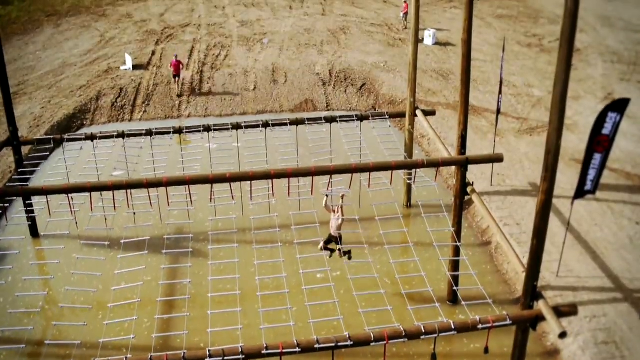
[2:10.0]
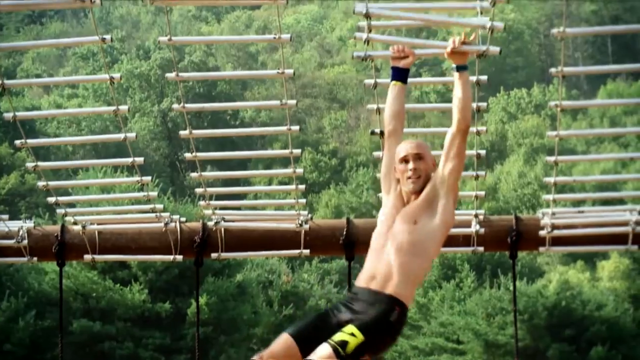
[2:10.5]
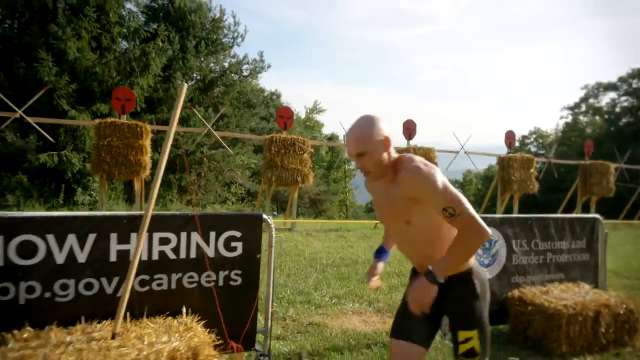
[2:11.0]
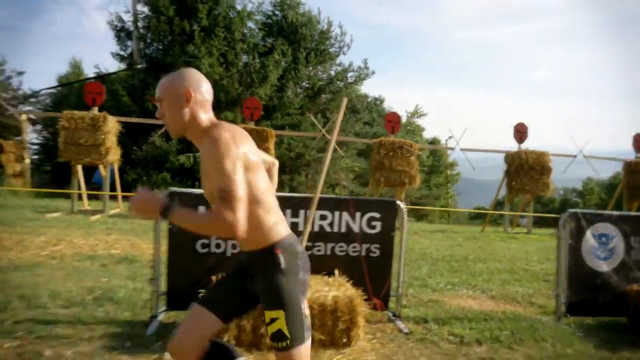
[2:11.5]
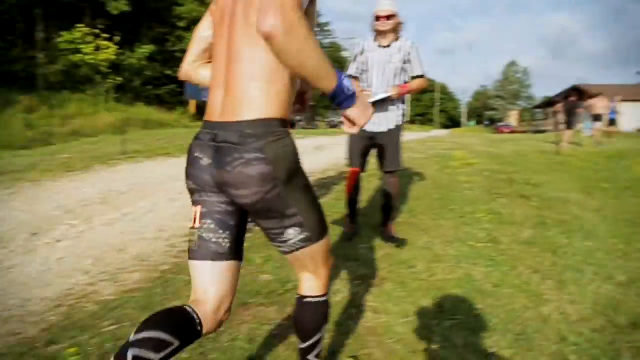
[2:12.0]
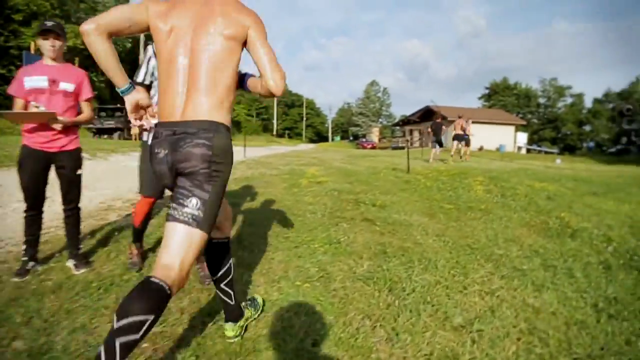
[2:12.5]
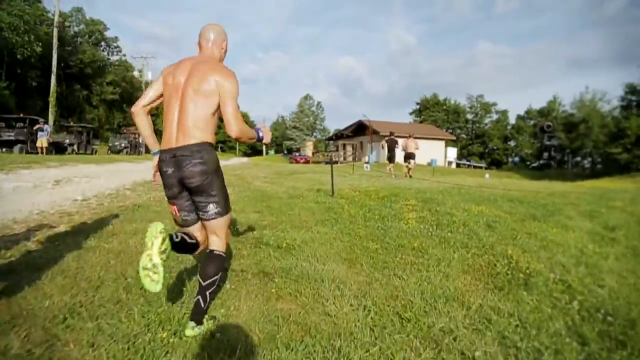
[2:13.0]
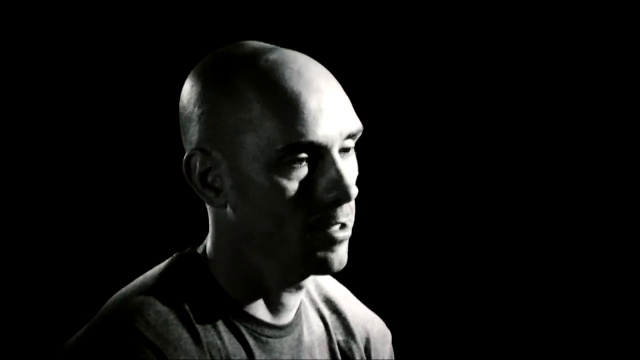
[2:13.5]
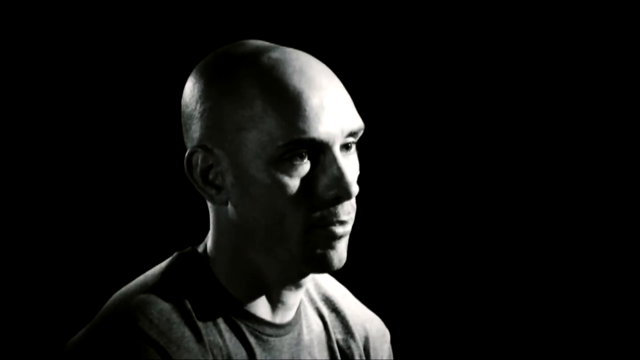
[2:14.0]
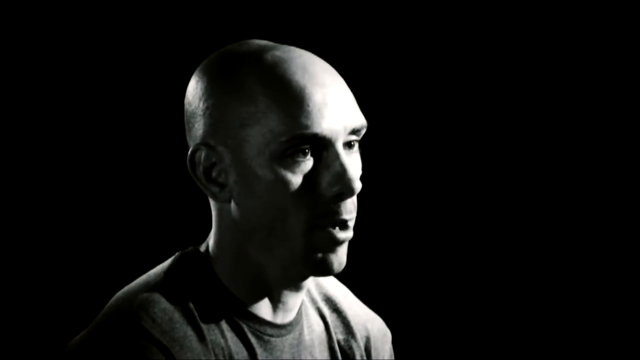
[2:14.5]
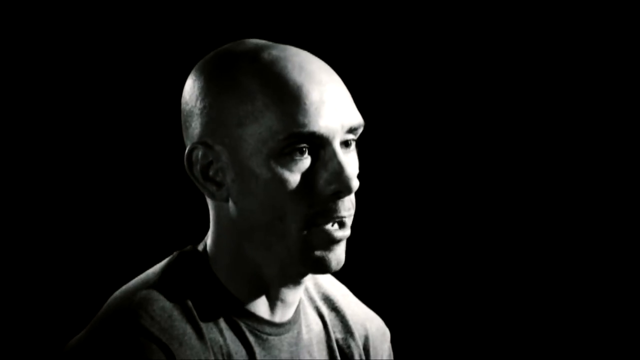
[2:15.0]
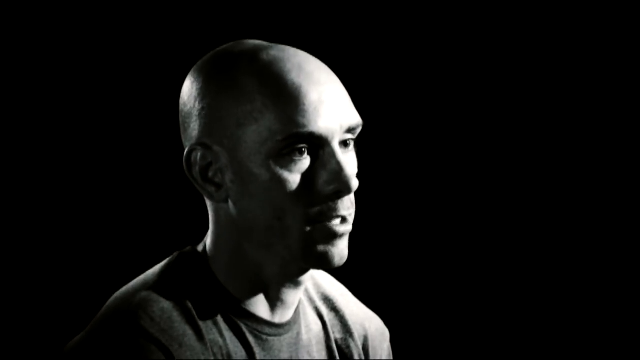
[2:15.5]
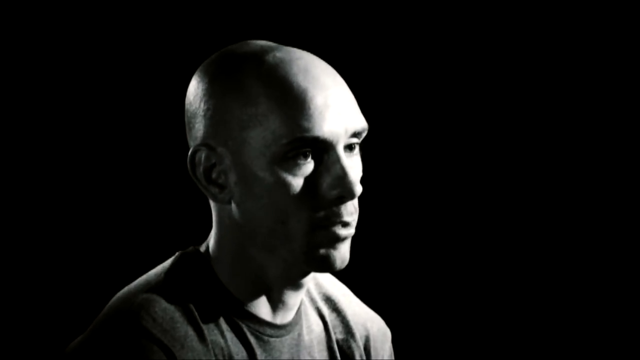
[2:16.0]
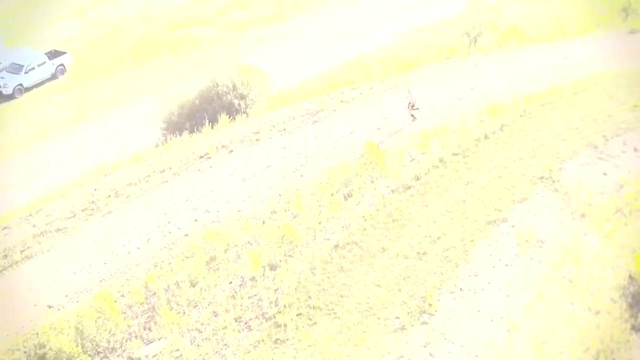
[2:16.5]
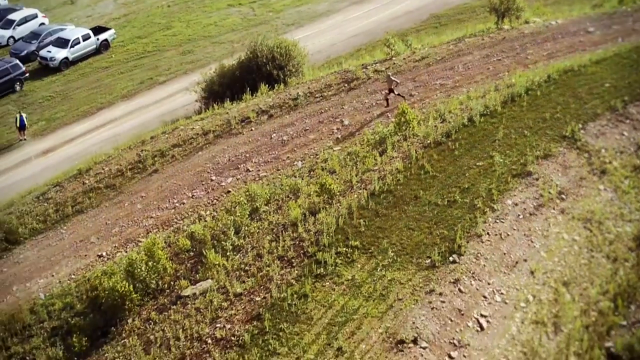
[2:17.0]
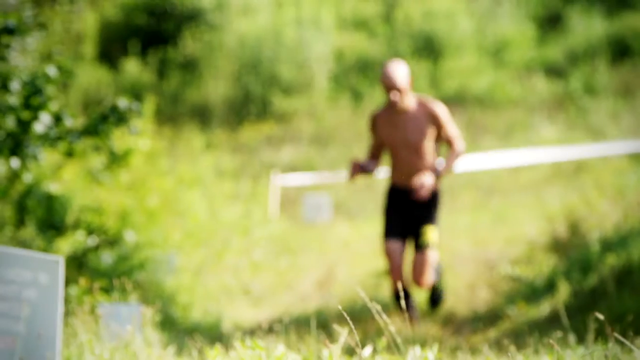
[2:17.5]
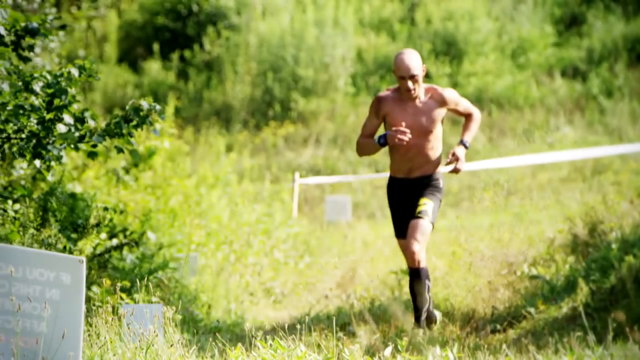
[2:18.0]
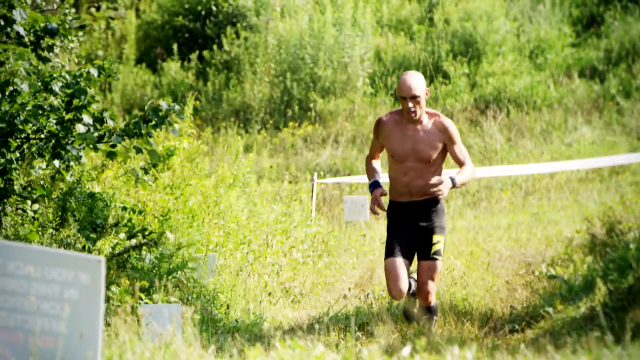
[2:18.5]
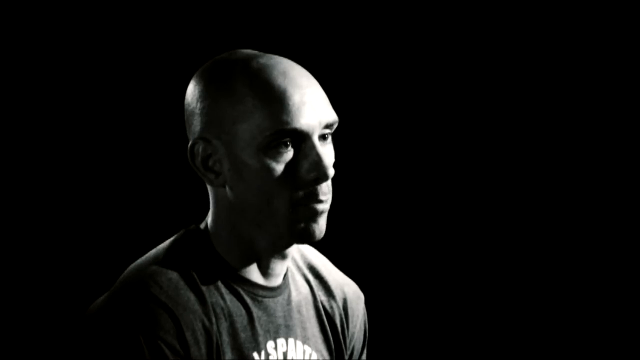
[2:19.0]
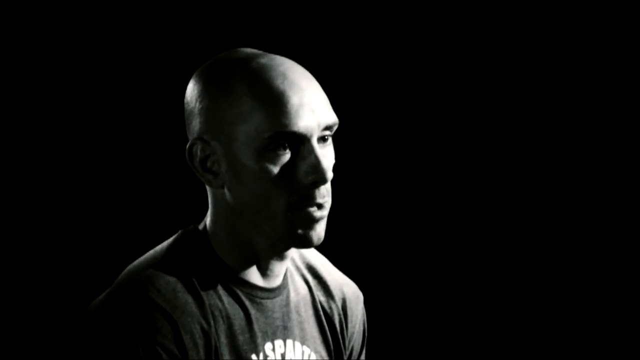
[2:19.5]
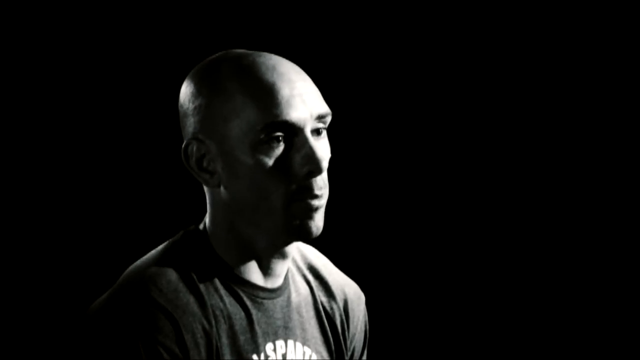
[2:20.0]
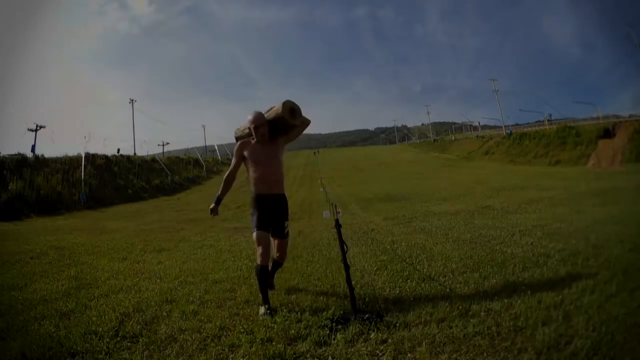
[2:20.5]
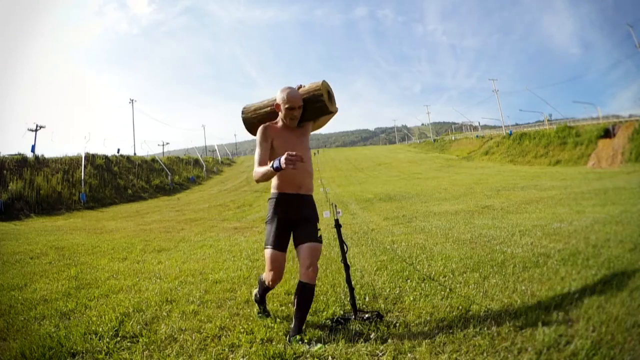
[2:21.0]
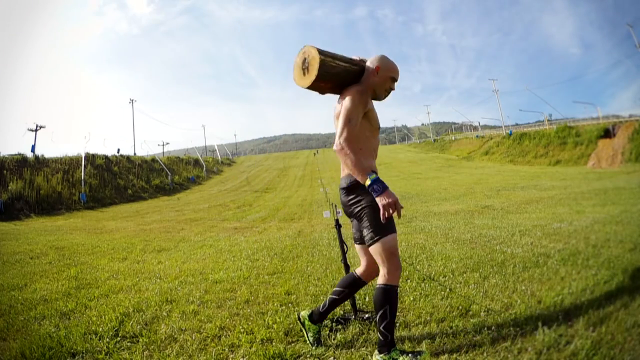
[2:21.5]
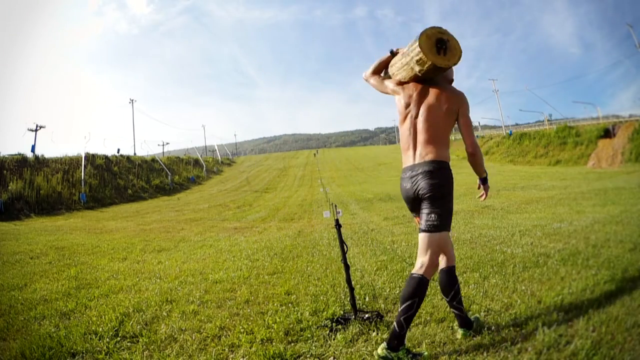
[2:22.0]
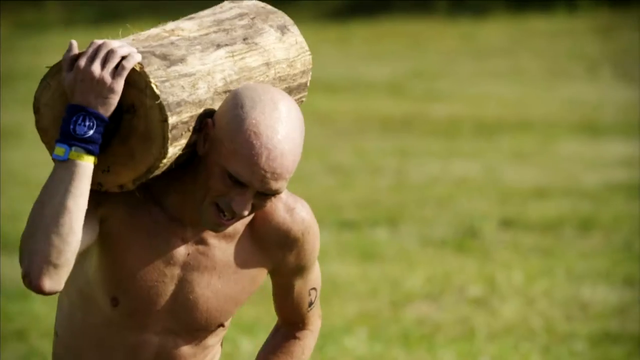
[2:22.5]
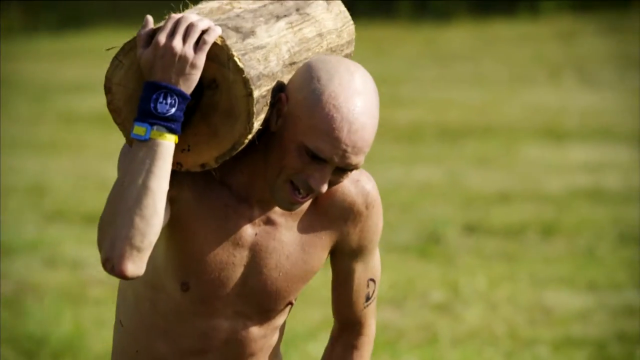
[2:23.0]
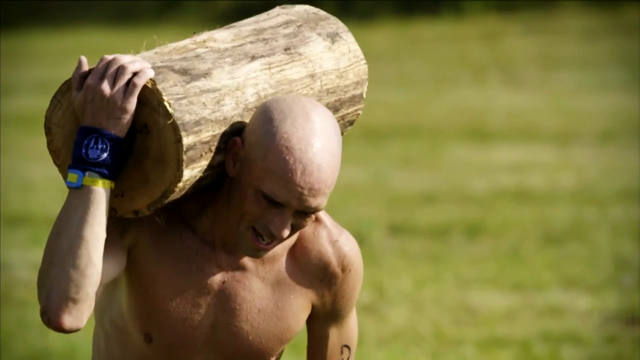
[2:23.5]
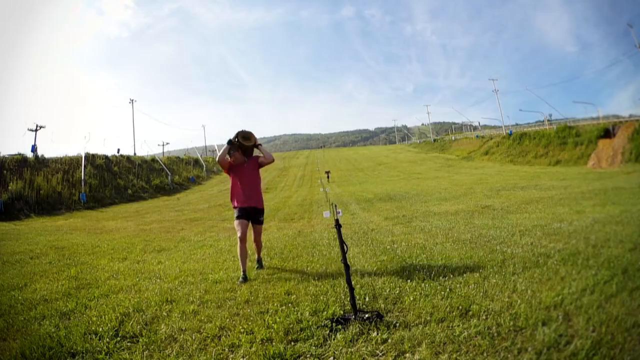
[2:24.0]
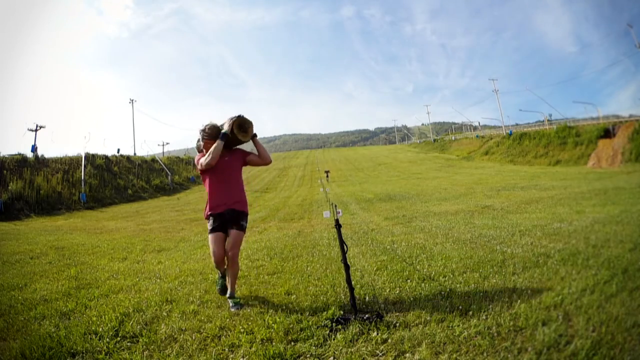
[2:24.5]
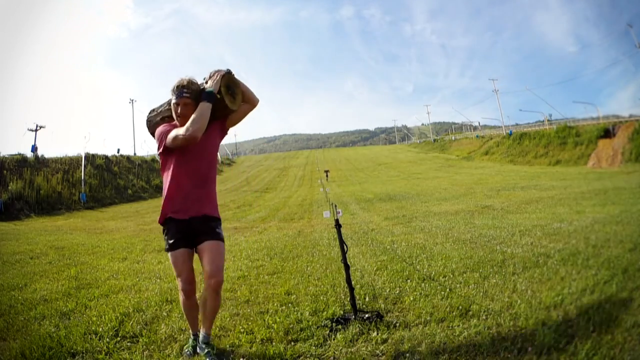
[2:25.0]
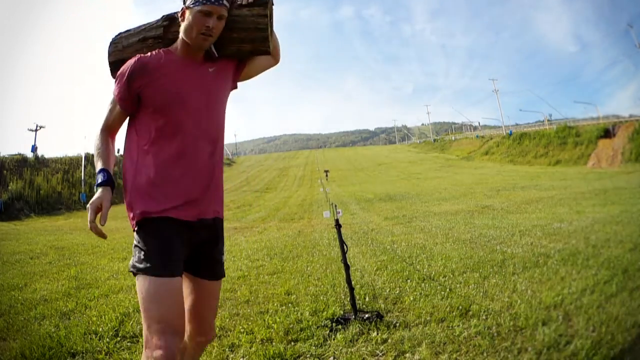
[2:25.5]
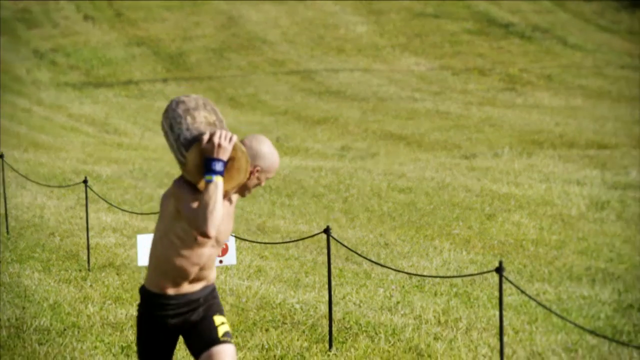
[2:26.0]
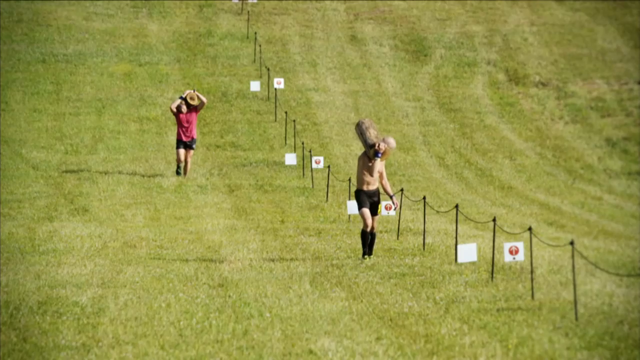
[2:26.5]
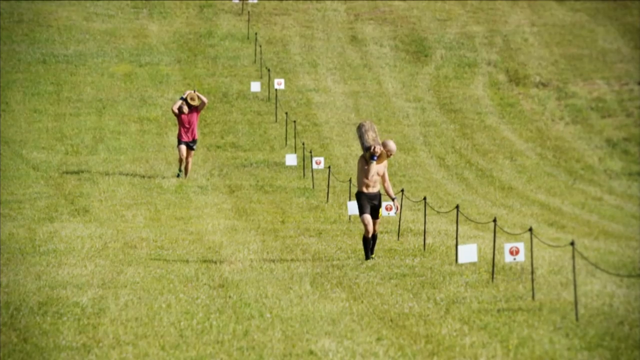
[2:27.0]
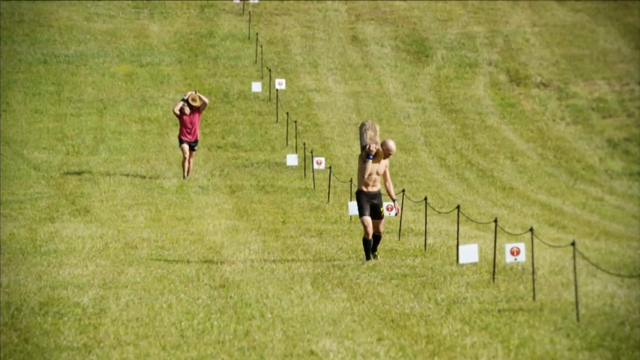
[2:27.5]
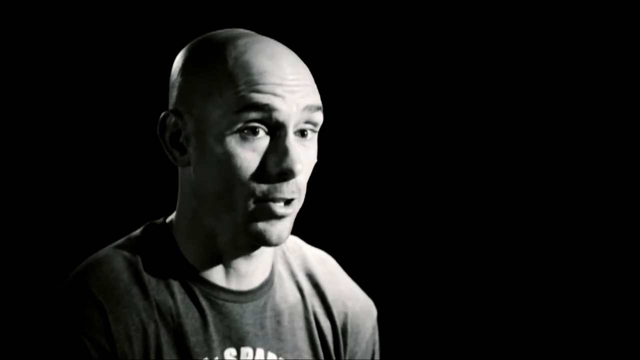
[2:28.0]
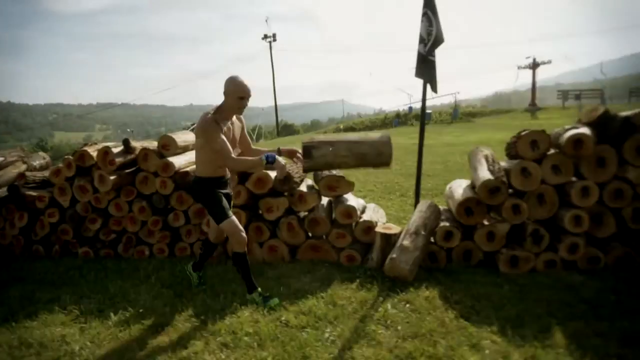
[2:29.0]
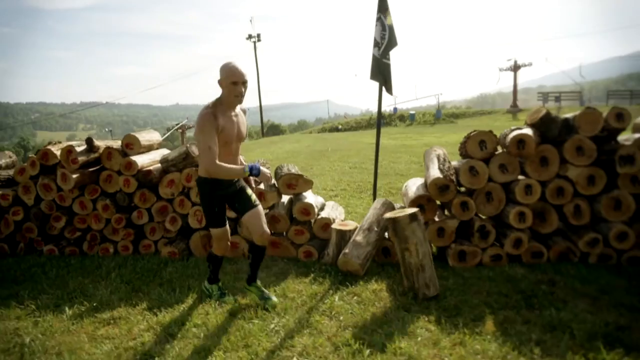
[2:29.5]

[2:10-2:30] He hangs from poles aligned parallel to the ground, probably about six or seven feet in the air, grabbing one pole in front of him, then the next, moving along them like on a gym set. In a different scene he runs forward past a referee. An interview follows, then an outdoor high view of him running and a front view of him running, then the same black and white interview angle. He then carries a log on his shoulder while slowly going up a slight hill and looks back at a competitor roughly 25 yards behind him. In slow motion, he drops the log.